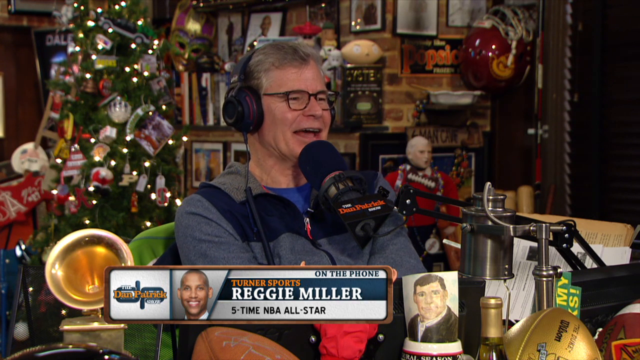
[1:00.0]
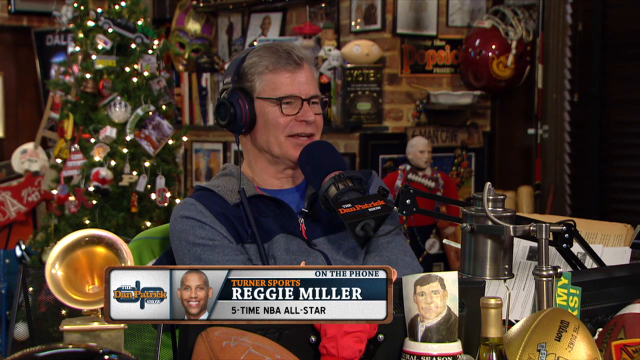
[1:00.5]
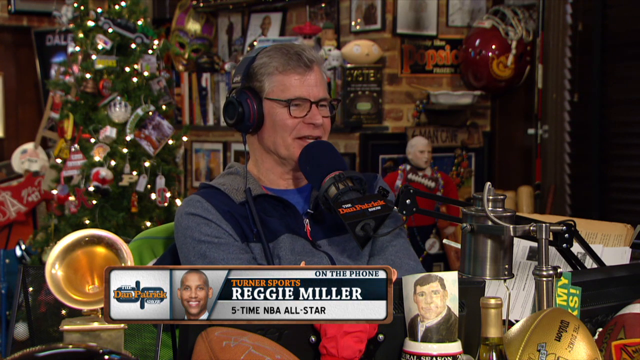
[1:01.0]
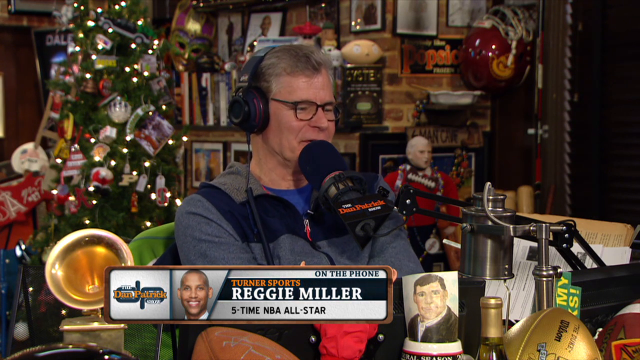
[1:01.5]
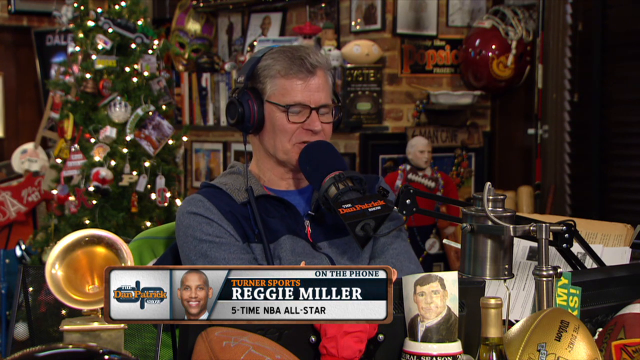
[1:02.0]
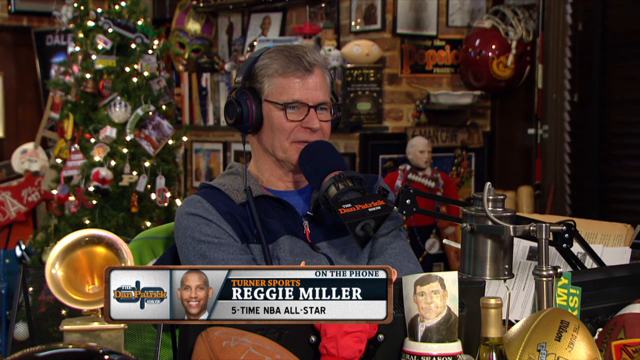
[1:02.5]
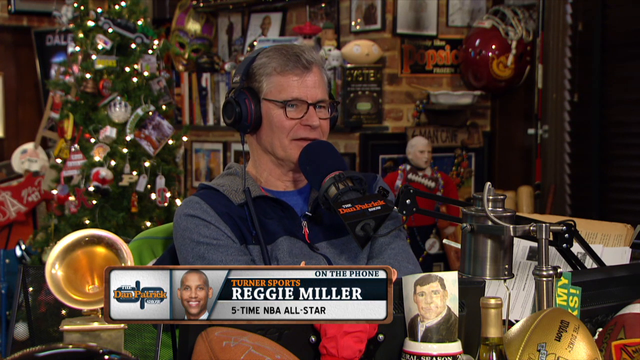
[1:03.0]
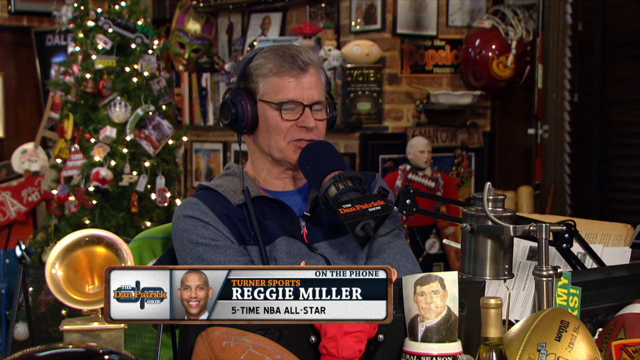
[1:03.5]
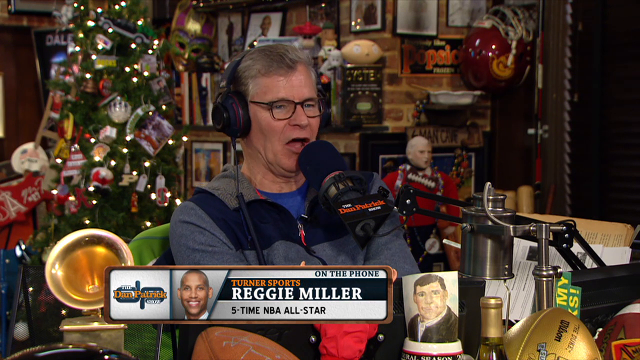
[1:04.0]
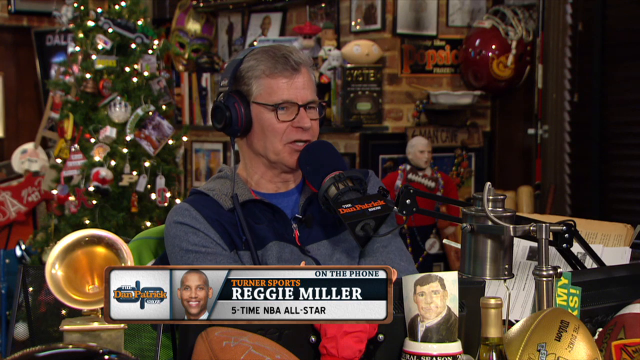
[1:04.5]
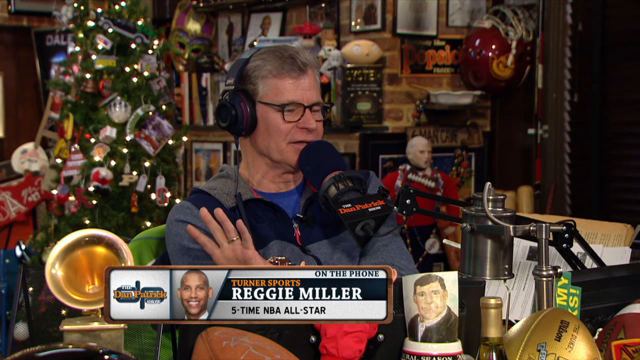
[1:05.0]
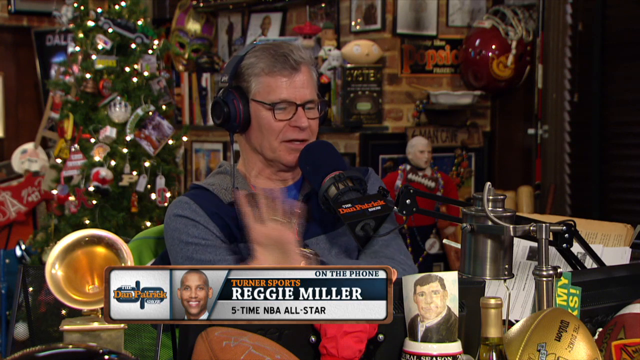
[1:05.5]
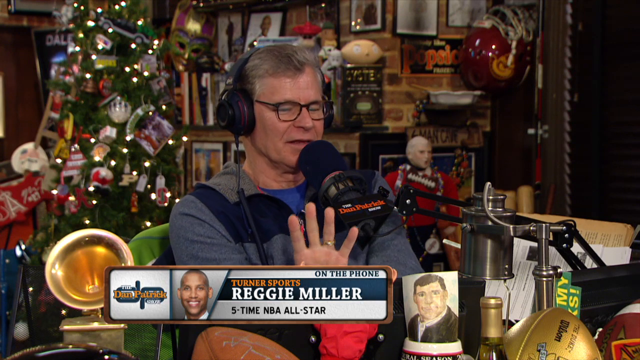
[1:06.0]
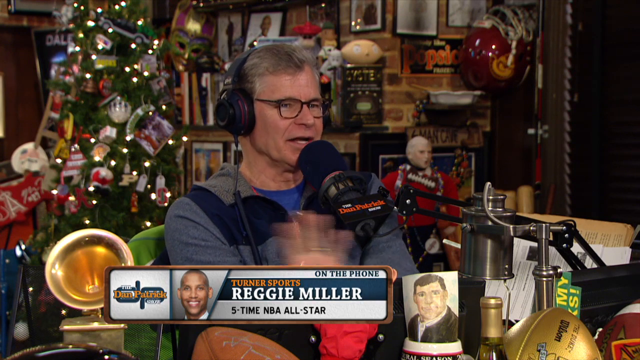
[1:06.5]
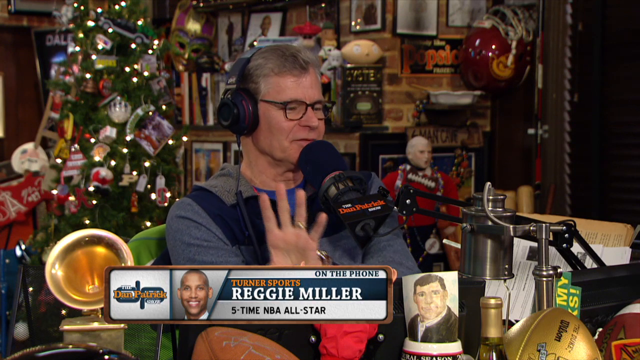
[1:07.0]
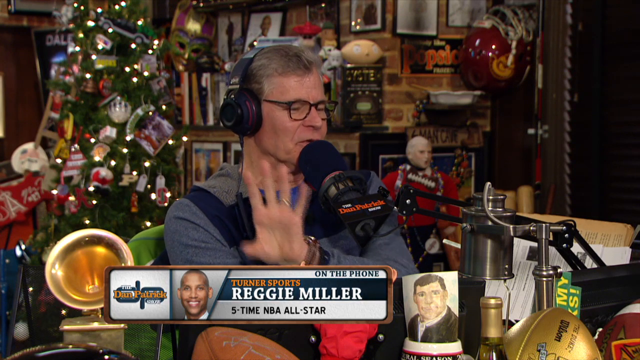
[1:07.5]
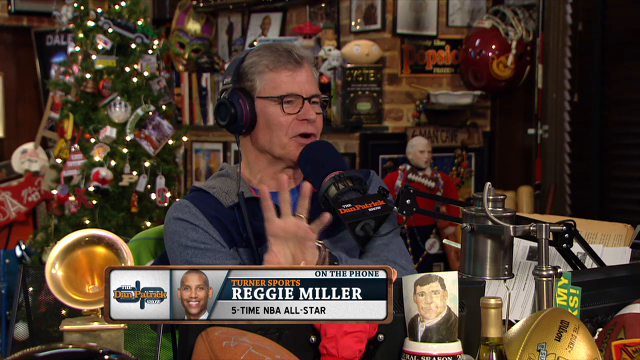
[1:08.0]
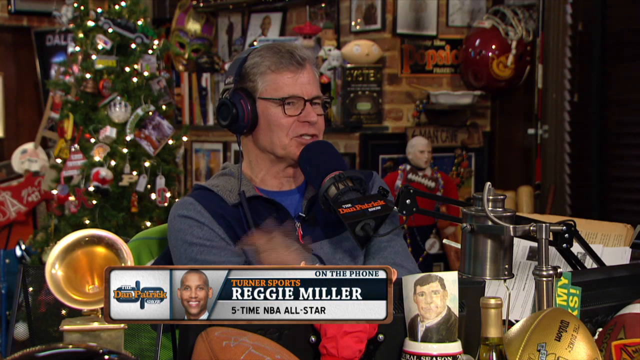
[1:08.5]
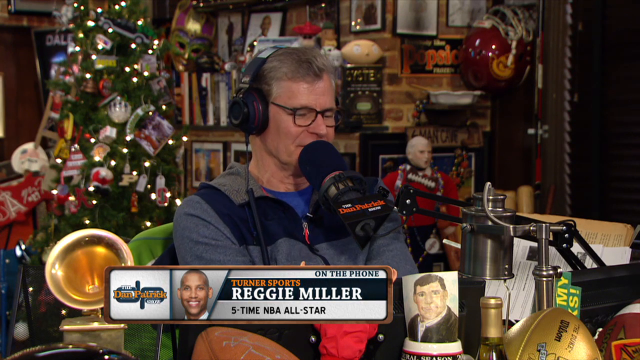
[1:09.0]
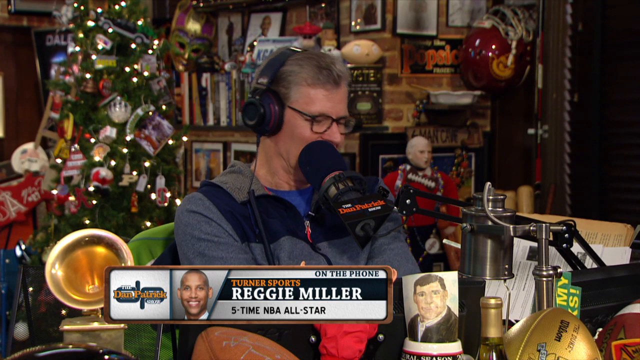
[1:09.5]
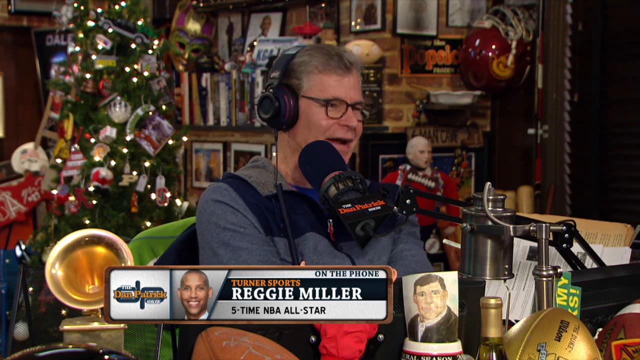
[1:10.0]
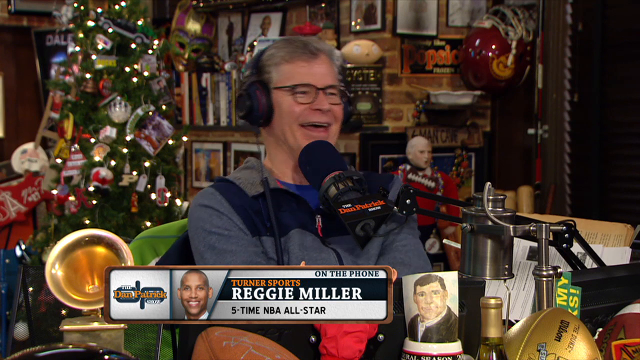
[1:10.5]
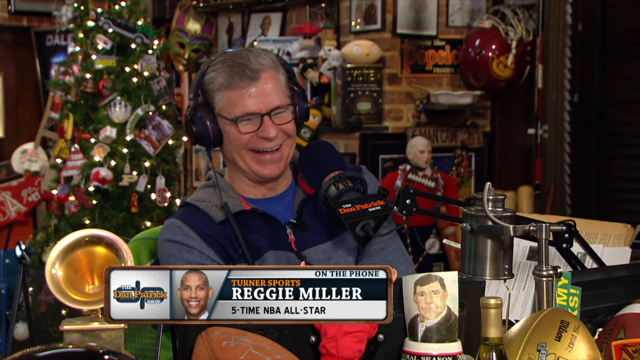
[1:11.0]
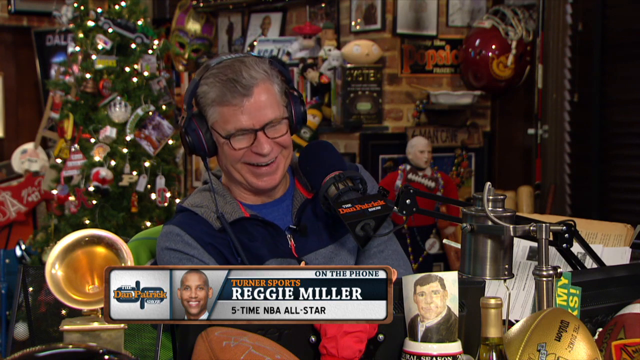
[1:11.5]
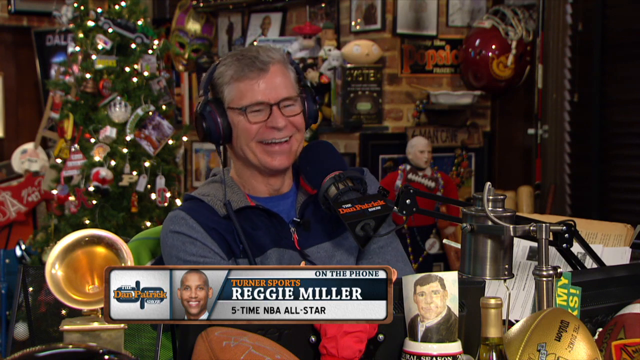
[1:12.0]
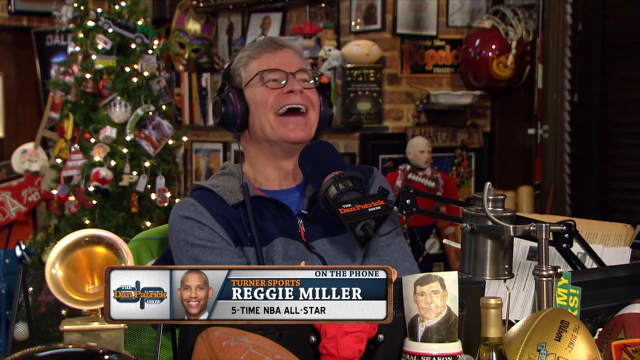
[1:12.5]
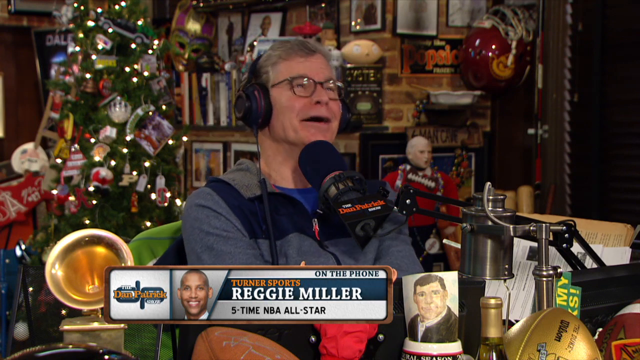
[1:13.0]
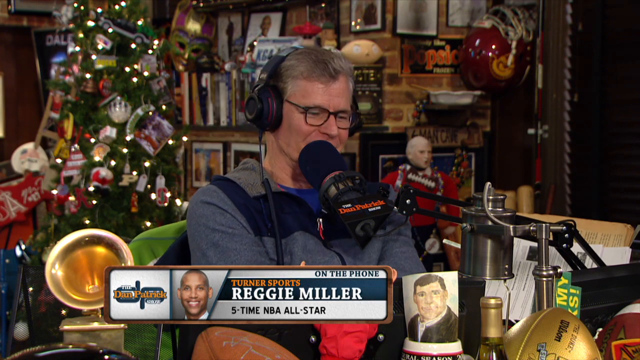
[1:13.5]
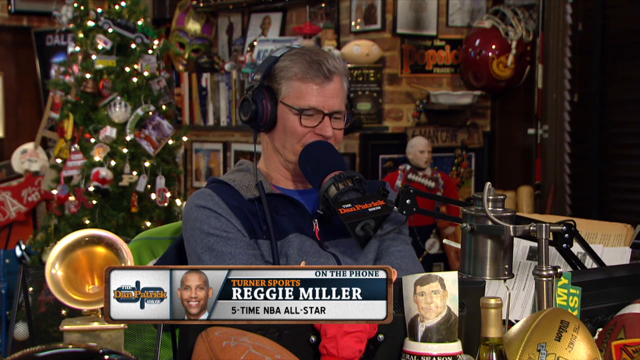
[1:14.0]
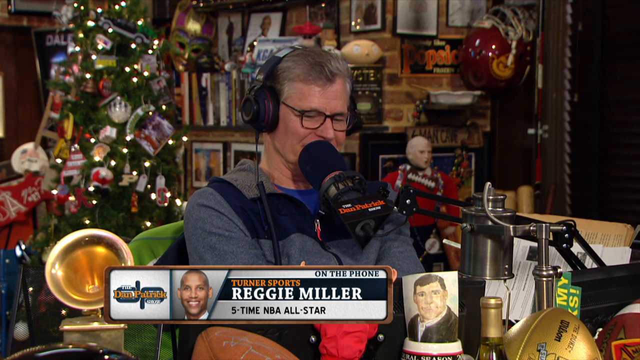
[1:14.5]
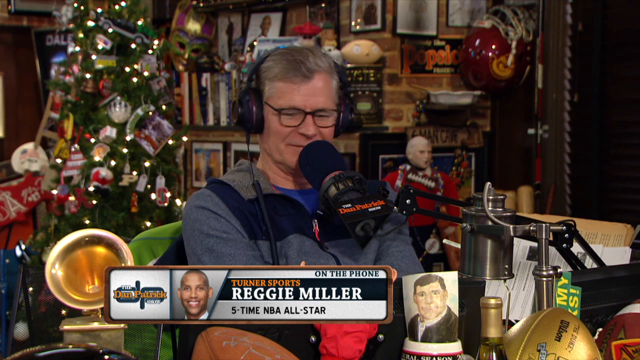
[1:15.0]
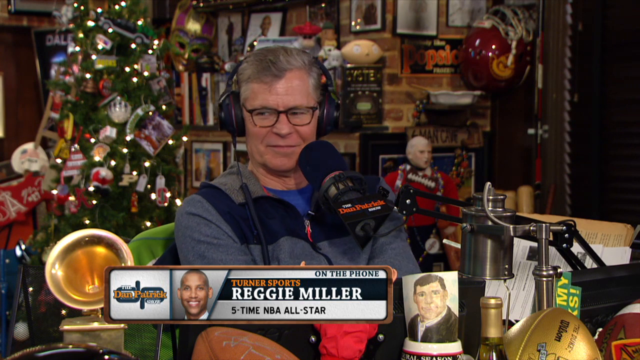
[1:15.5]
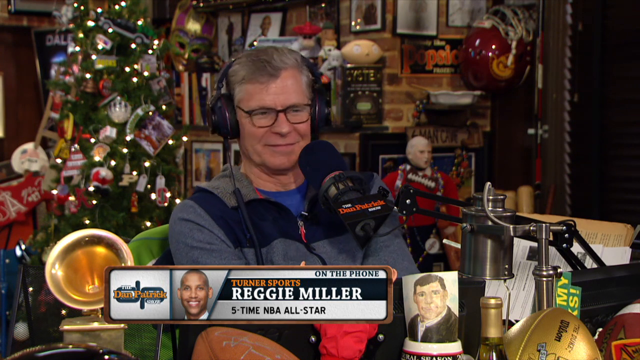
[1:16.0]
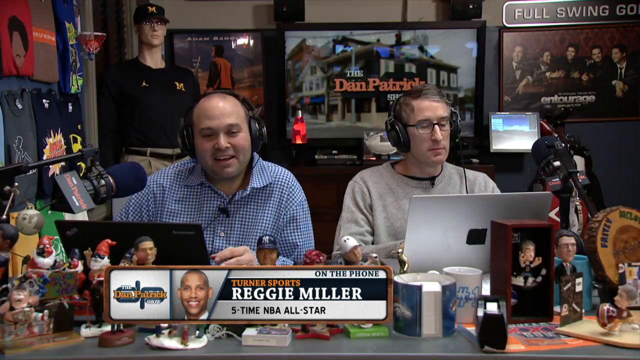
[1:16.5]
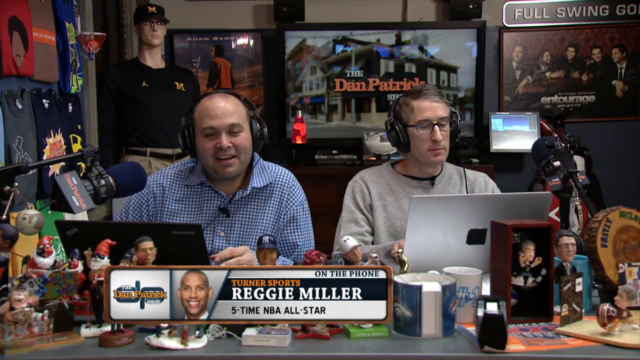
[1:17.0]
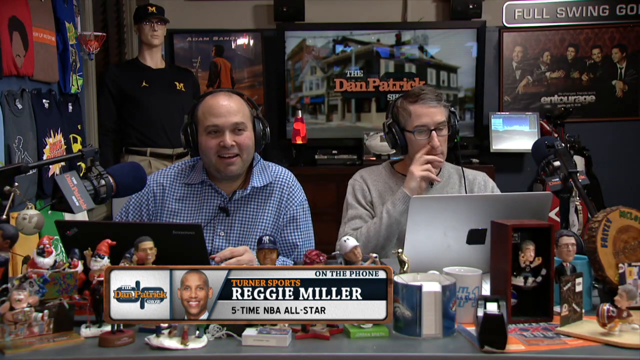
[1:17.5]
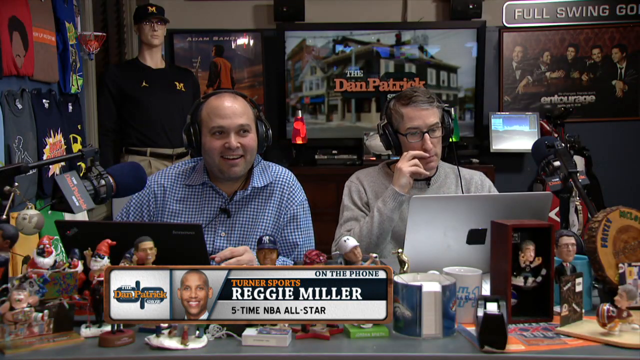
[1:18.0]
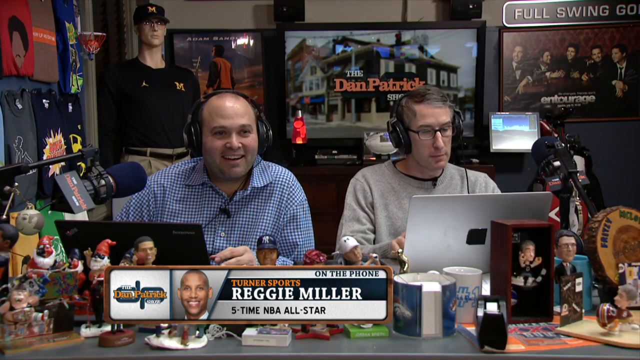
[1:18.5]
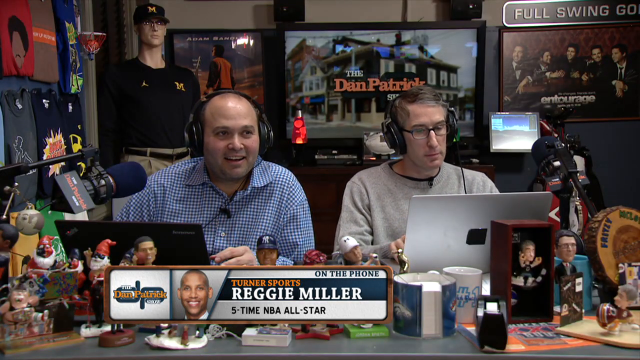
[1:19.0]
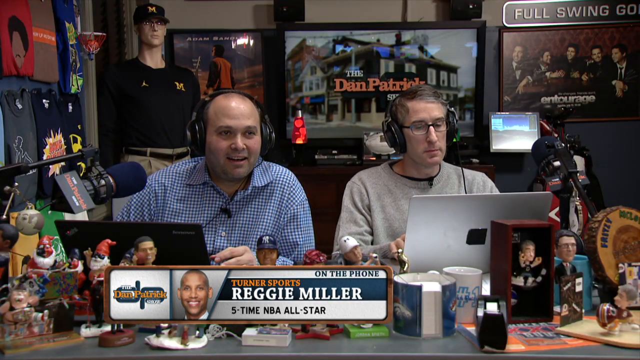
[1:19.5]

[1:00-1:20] Dan Patrick talks a bit more, laughing for a moment, and this time speaks more. He puts his left hand out, showing a wedding ring, and opens his hands so the bottom part of his hand is visible as he holds it in front of him. He makes a couple of swipes and wears a leather watch. For emphasis he points with his hands spread out. He moves a little to the left, leaning slightly to the right, and fidgets in his seat. The view goes to the guys at the far desk: a balding guy, and a guy on the right with short hair combed to the left, wearing glasses and a long-sleeved gray shirt. Both have laptops in front of them, along with a bunch of bobbleheads, some little Santa Claus figurines and some coffee mugs; golf clubs are on a stand in the back. In the far left is a mannequin that looks like the head coach of the Michigan Wolverines, wearing a matching blue hat and shirt with a yellow emblem, and khakis. Some movie posters are up as well.